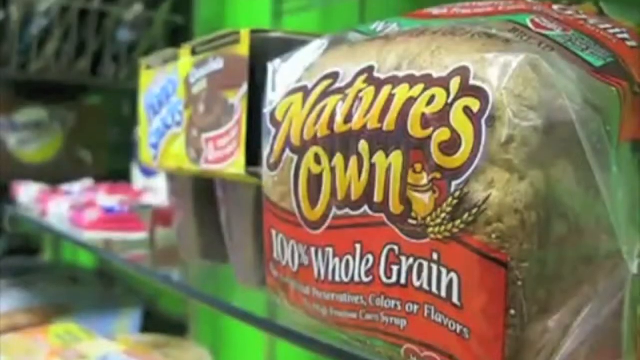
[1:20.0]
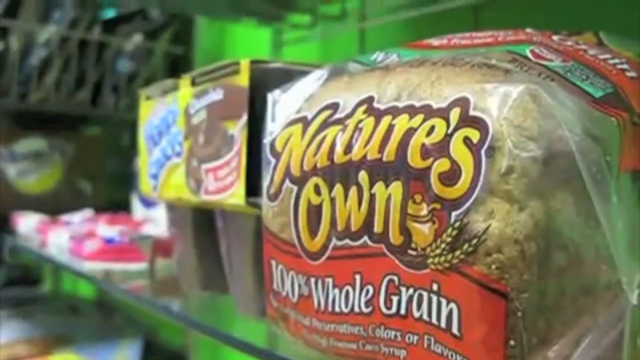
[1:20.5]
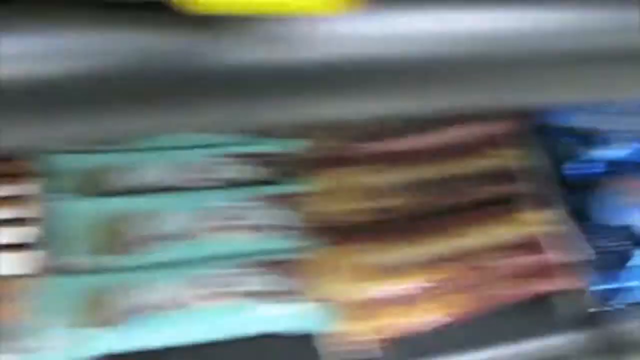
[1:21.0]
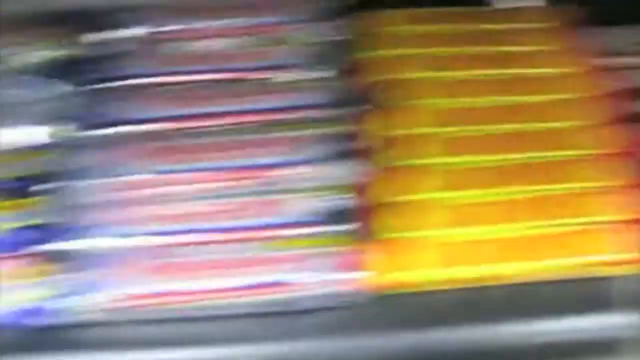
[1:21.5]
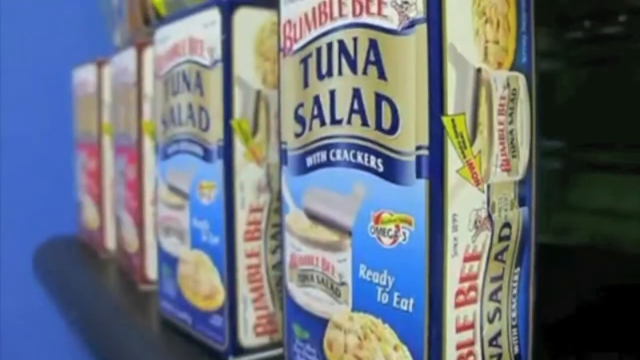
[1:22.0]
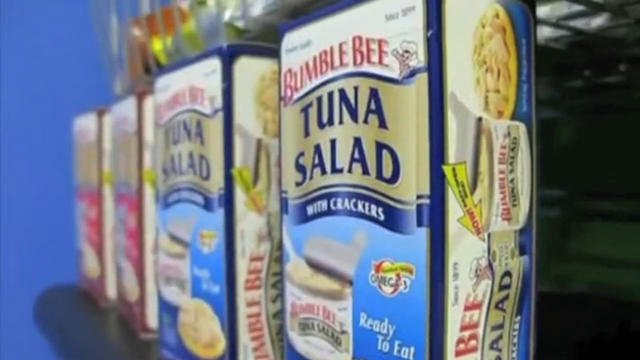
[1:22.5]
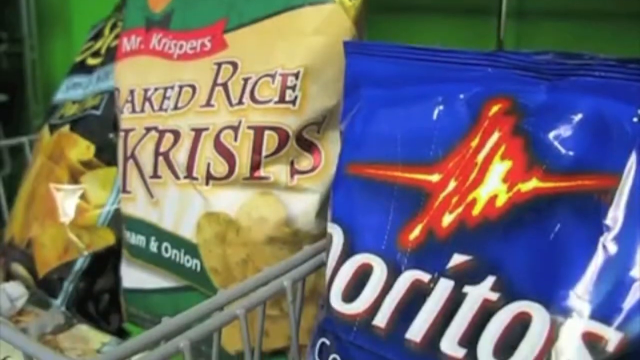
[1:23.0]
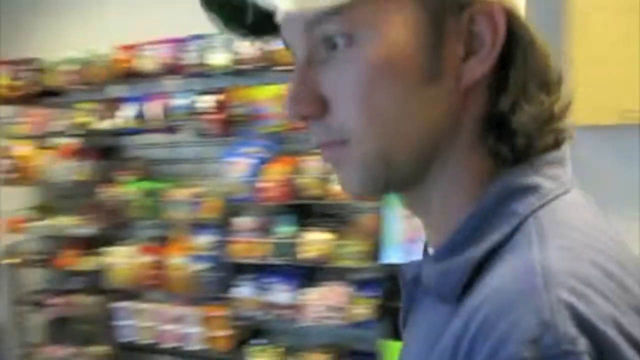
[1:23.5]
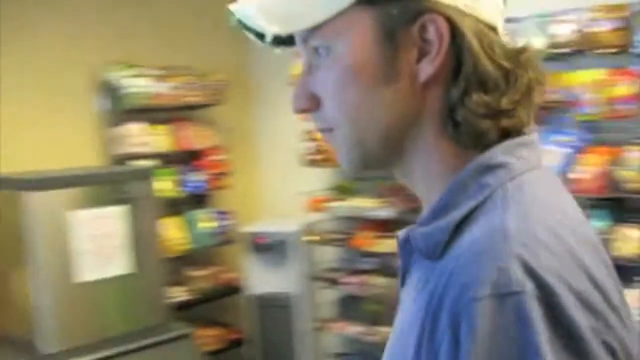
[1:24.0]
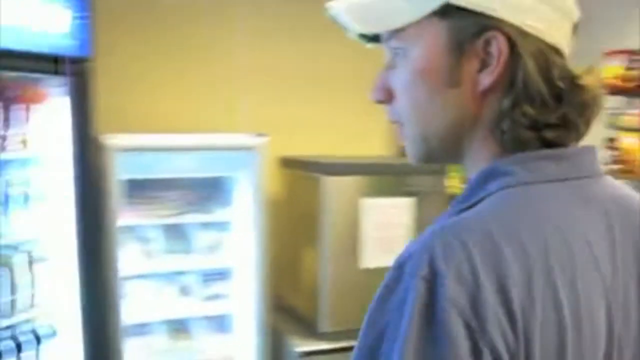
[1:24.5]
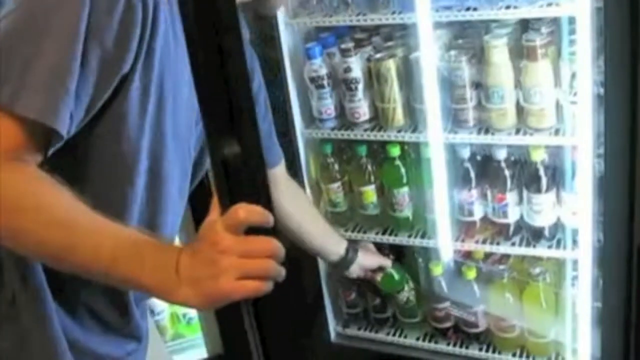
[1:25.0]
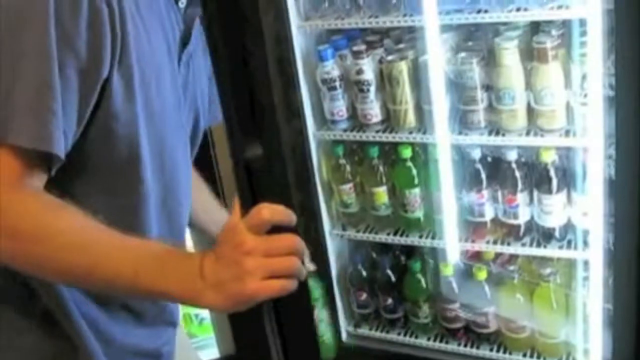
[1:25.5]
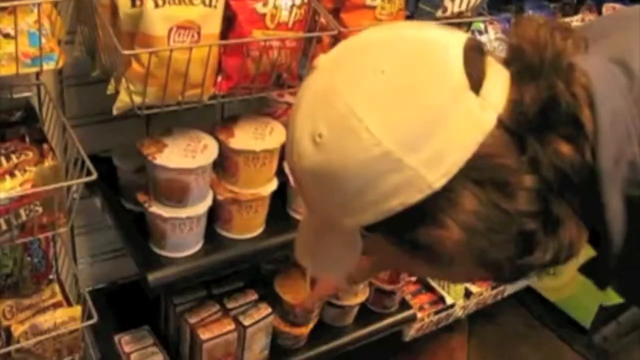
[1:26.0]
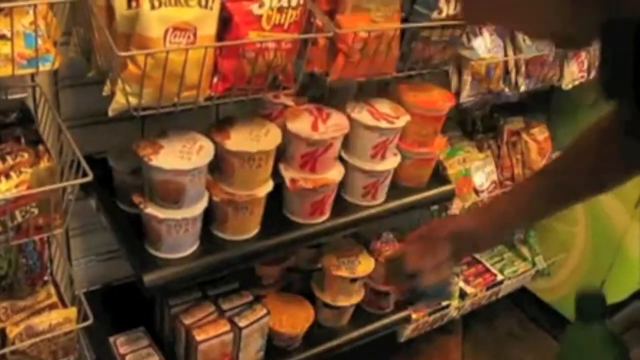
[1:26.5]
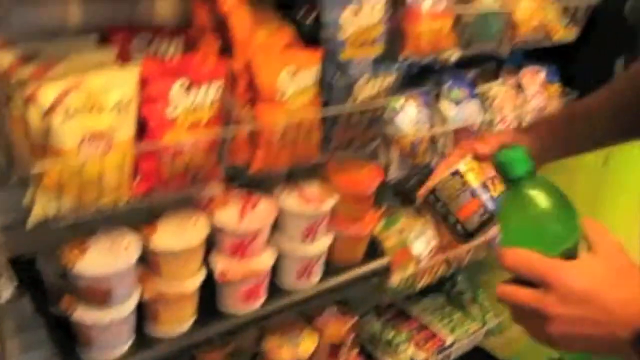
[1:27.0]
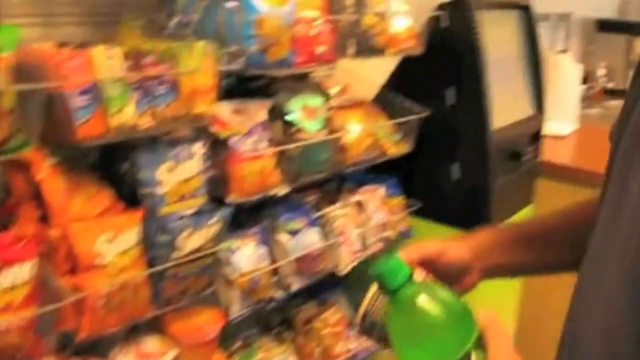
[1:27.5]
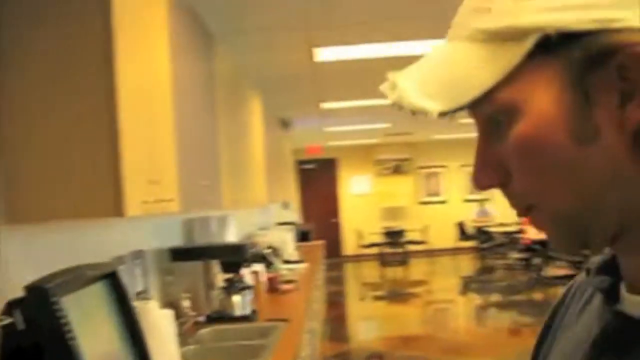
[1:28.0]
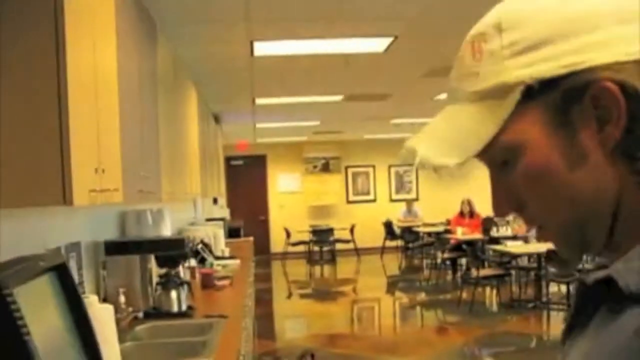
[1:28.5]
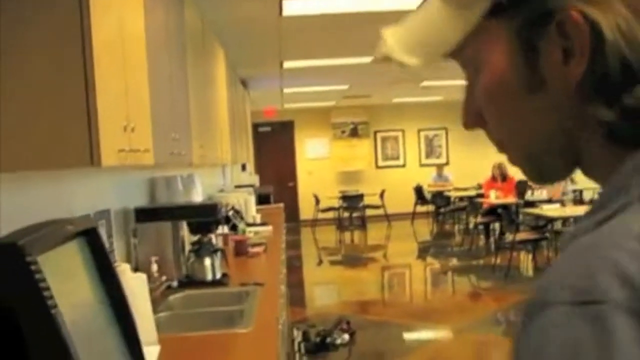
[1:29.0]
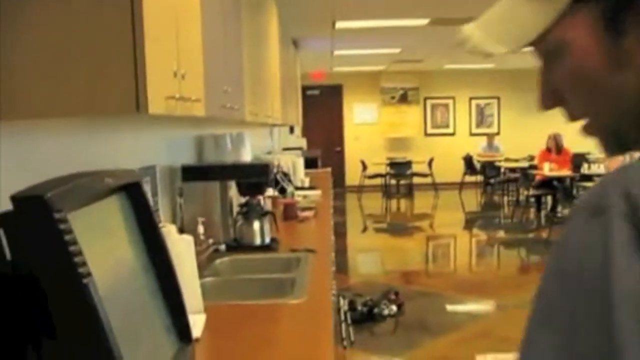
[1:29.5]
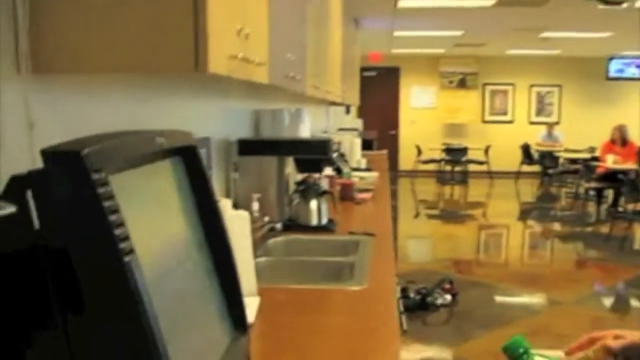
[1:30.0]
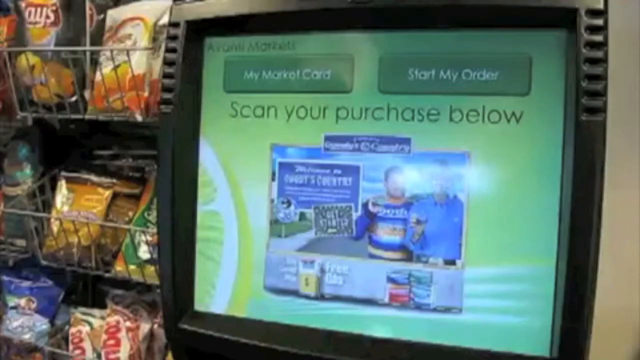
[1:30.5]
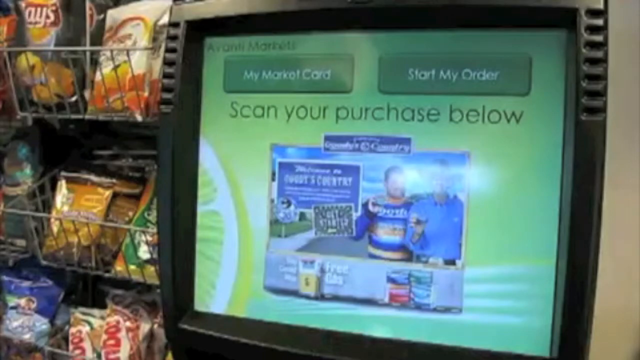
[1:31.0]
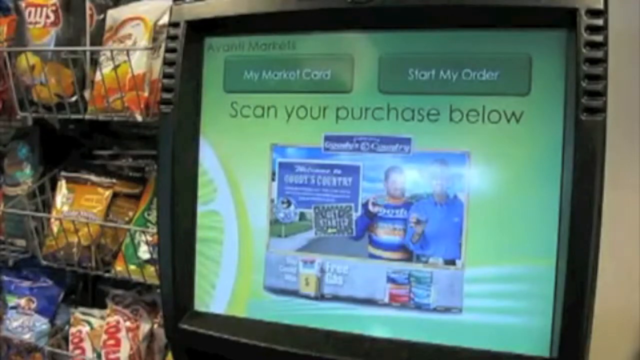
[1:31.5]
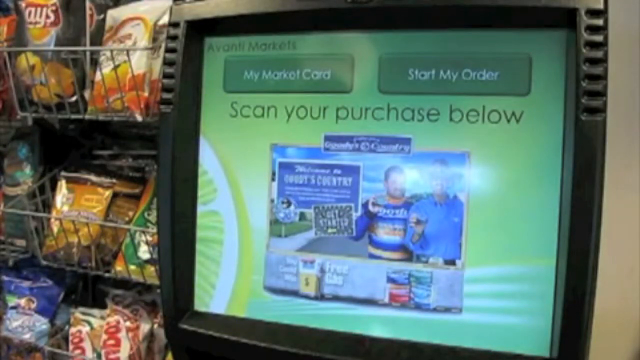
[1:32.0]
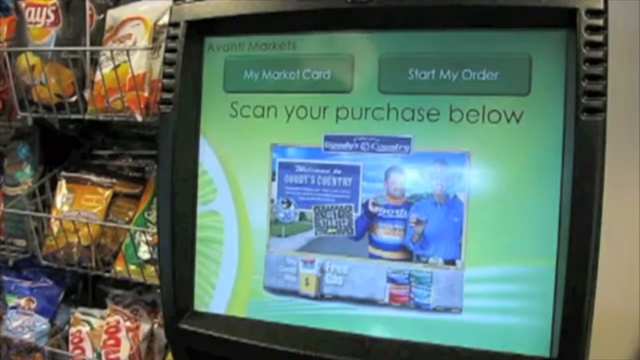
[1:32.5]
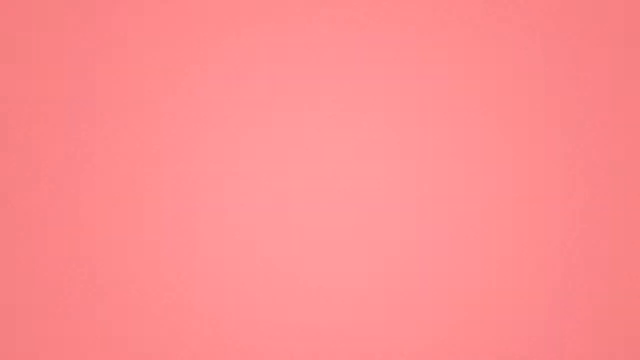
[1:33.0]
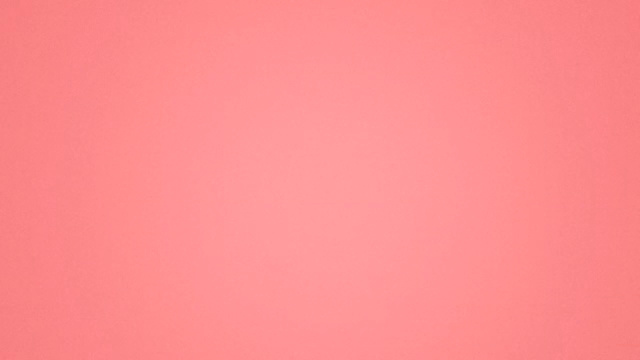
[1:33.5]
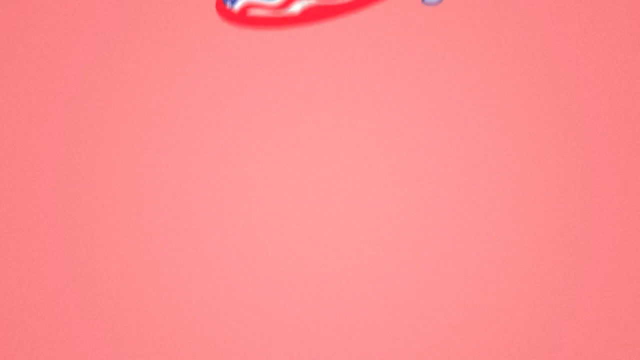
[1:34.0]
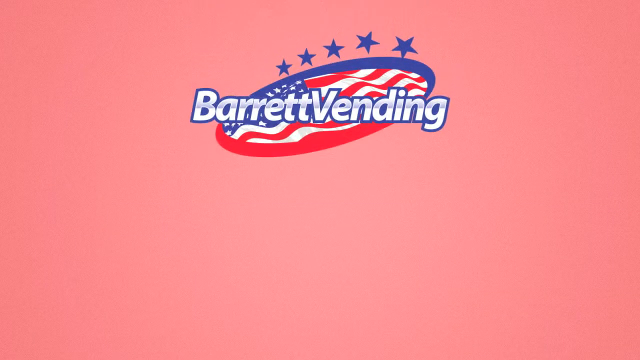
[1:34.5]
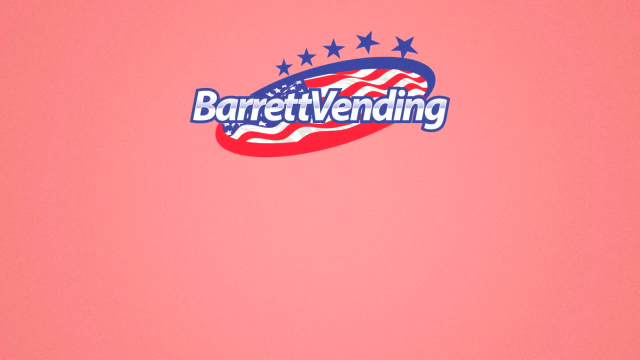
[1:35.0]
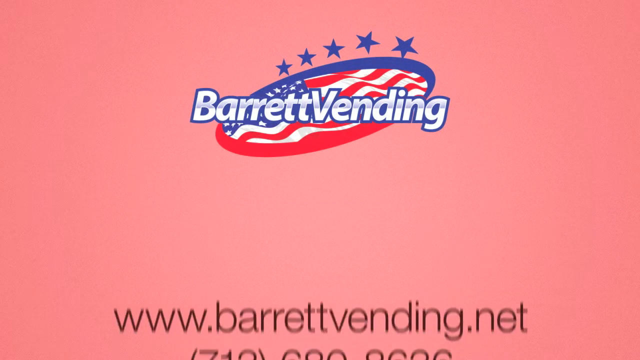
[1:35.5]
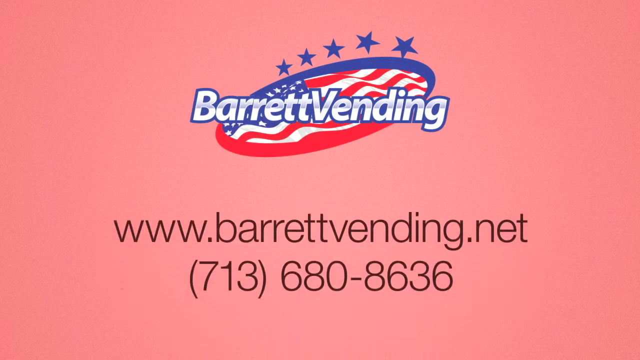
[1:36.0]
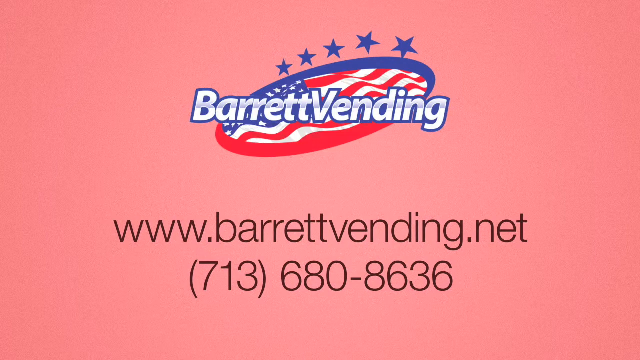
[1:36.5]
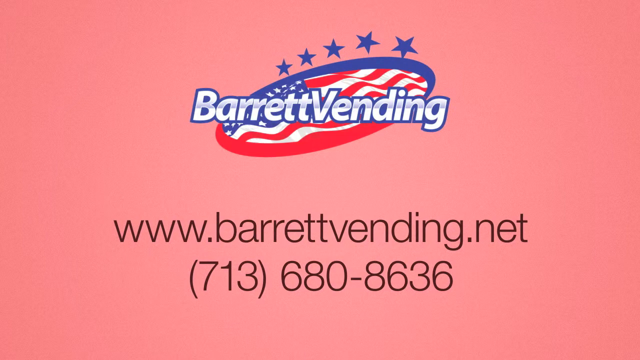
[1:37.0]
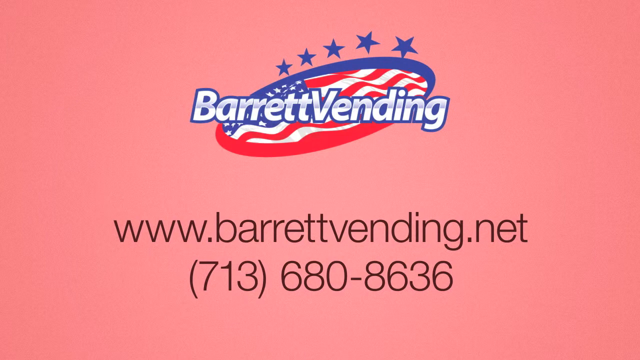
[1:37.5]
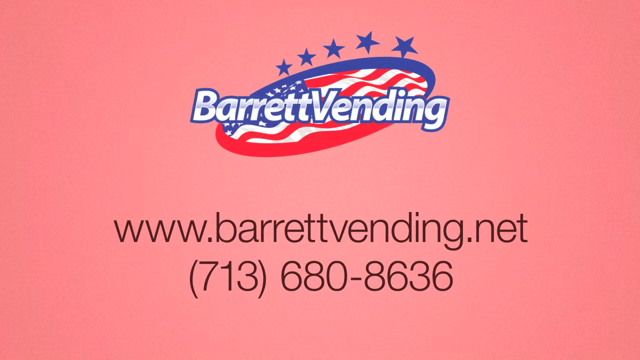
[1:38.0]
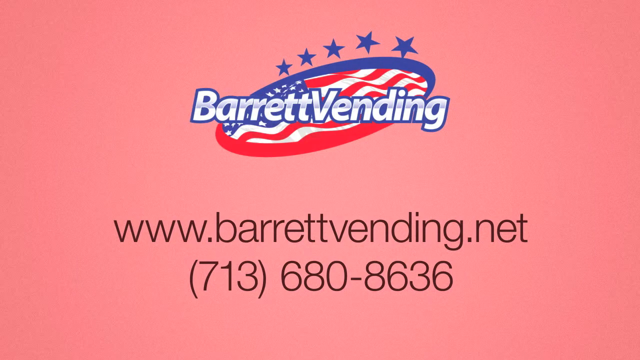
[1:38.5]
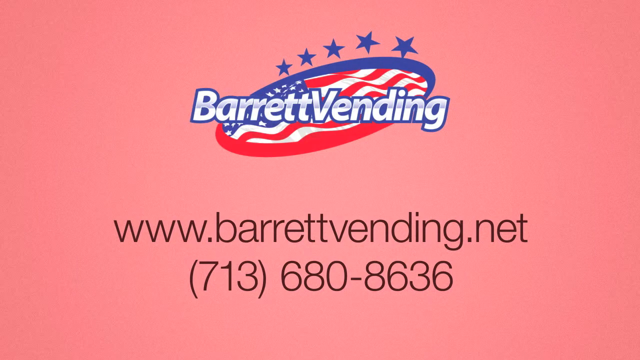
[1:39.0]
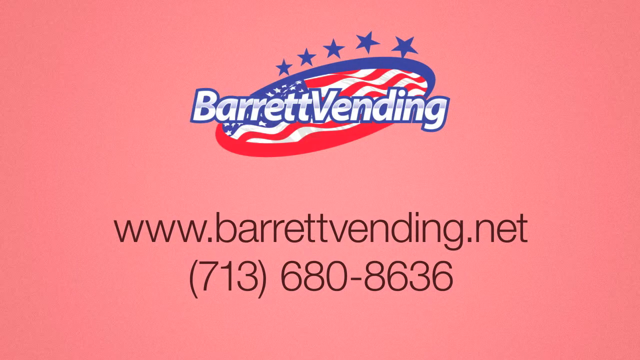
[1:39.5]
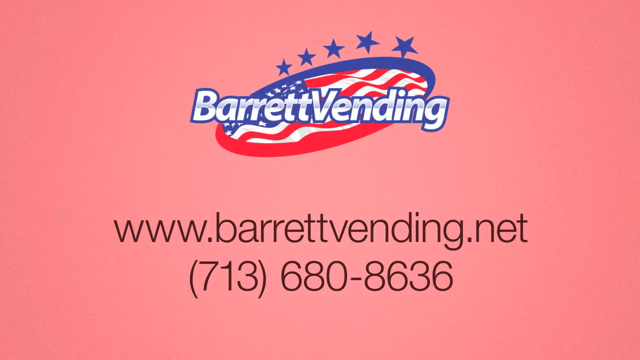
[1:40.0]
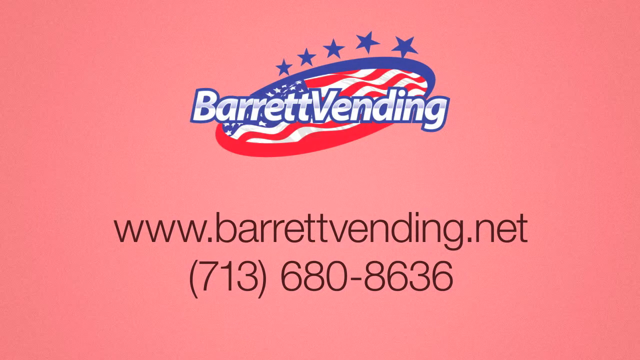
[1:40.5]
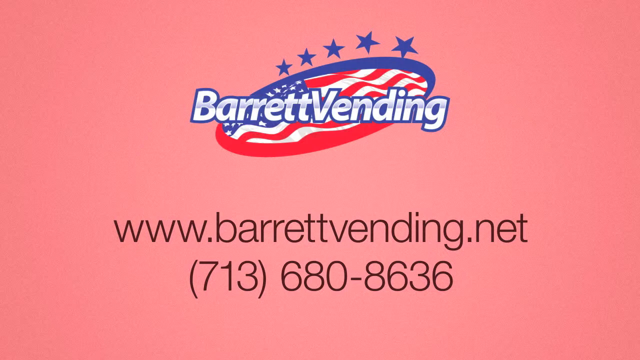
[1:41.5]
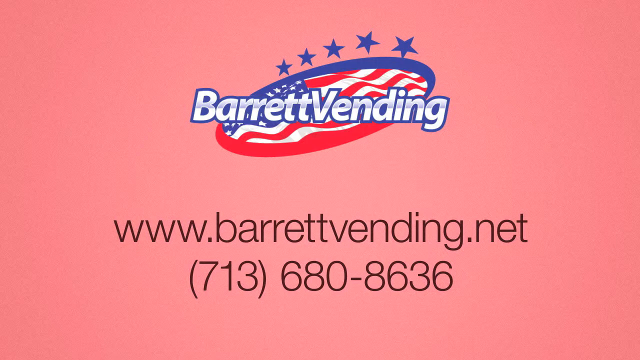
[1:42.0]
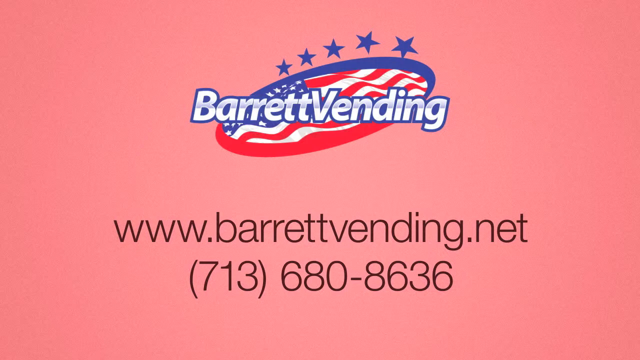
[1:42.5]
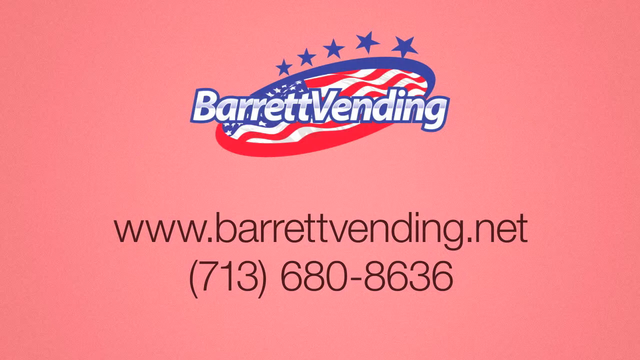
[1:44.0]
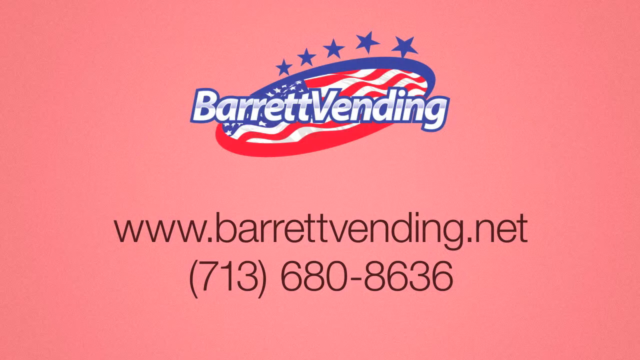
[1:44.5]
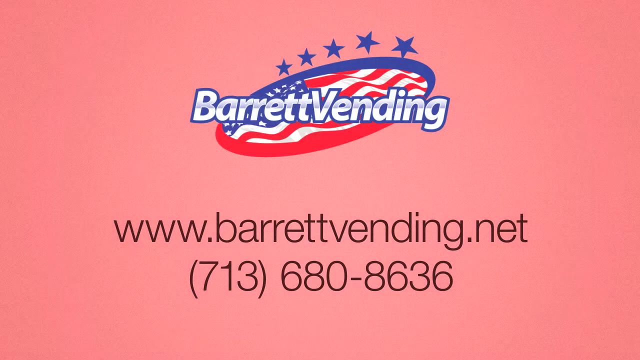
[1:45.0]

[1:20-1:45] The camera pans into Bumblebee tuna salad with crackers, followed by baked rice krisps and Doritos. A man with long blonde hair wearing a cap appears. He takes a drink out of a refrigerator, takes something to eat, and goes to a screen where the purchase is scanned below in order to pay. His drink seems to be in a green bottle, possibly a juice or Sprite, and his food comes in a cup-like package. The video finishes with a pink screen on which Barrett Vending appears again, along with the website www.barrettvending.net and the phone number 713-608-8636. This screen with the website and the name stays for approximately 7 or 8 seconds.